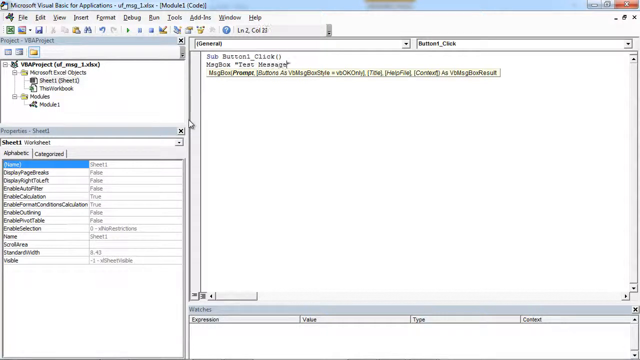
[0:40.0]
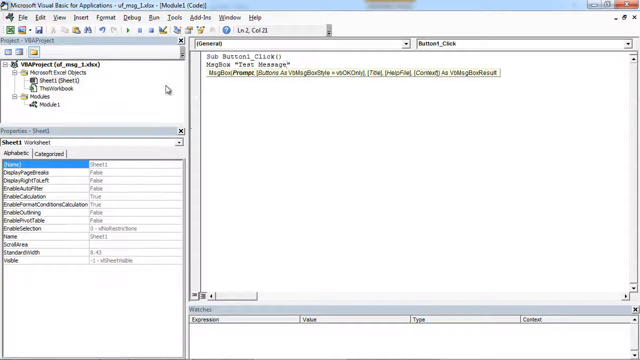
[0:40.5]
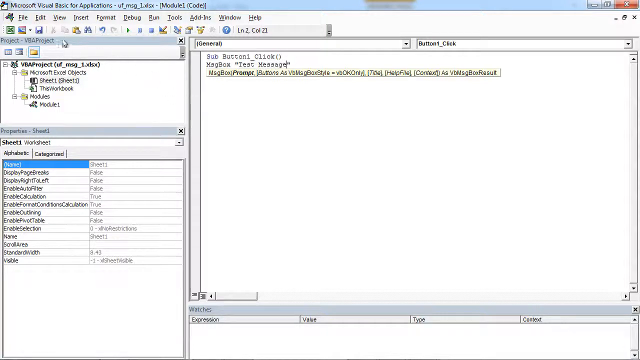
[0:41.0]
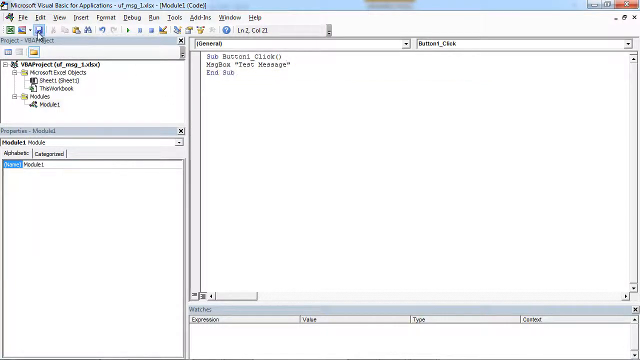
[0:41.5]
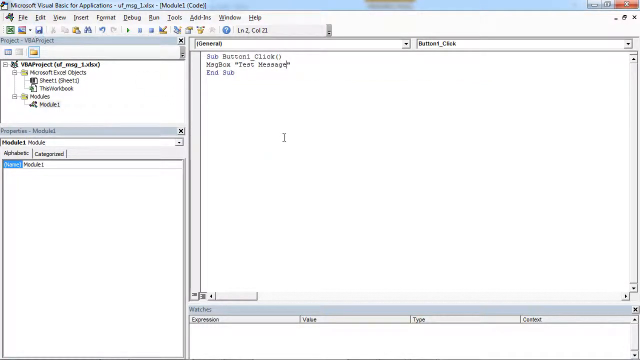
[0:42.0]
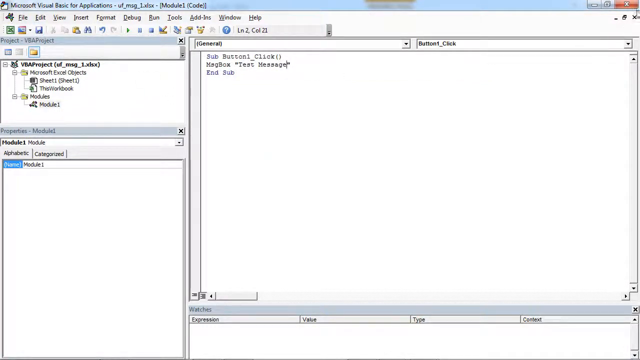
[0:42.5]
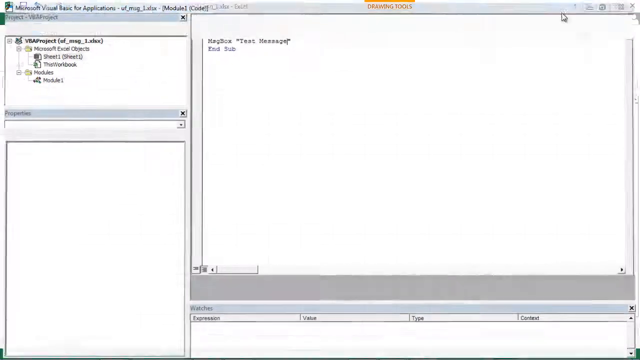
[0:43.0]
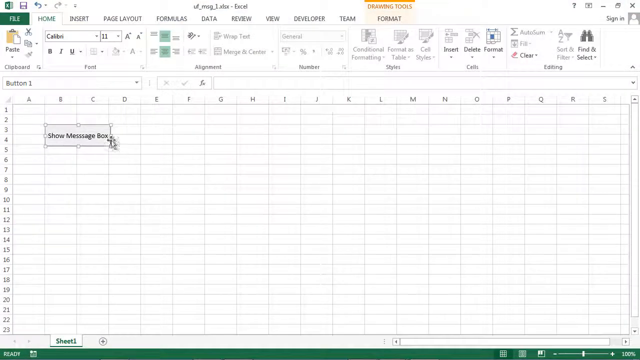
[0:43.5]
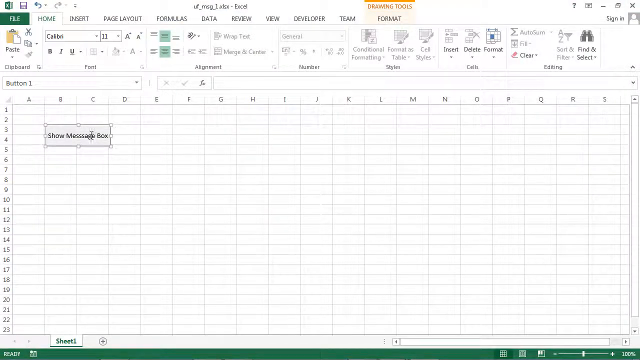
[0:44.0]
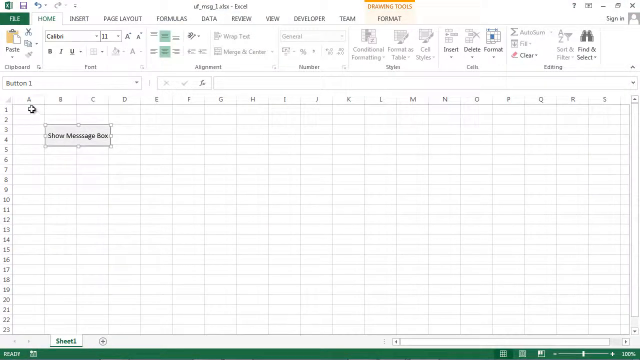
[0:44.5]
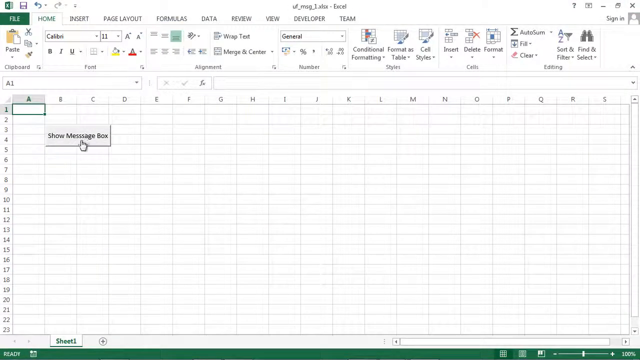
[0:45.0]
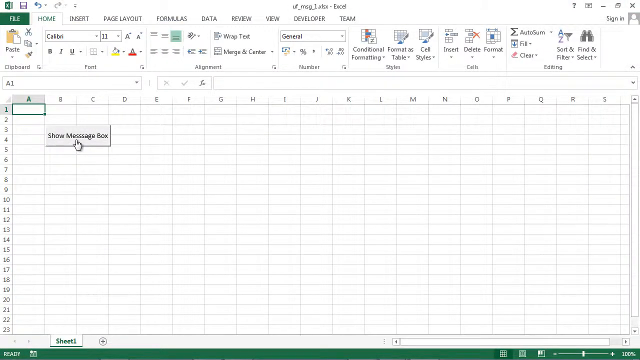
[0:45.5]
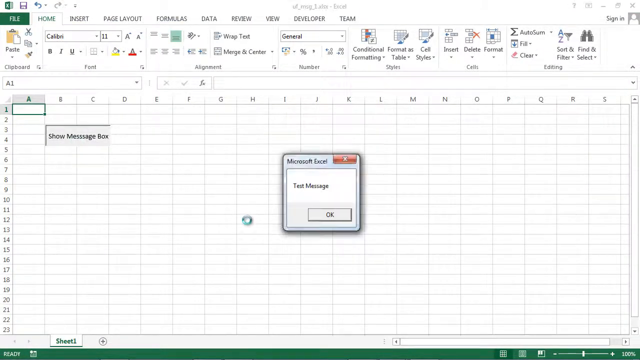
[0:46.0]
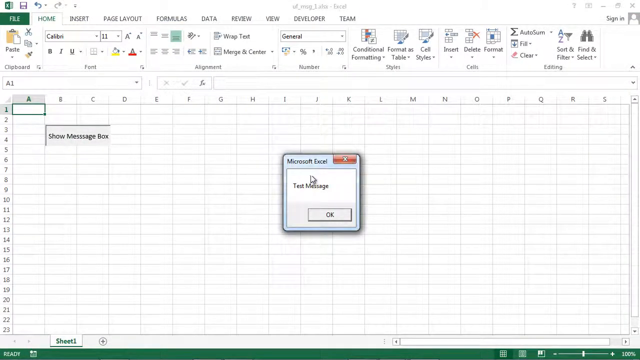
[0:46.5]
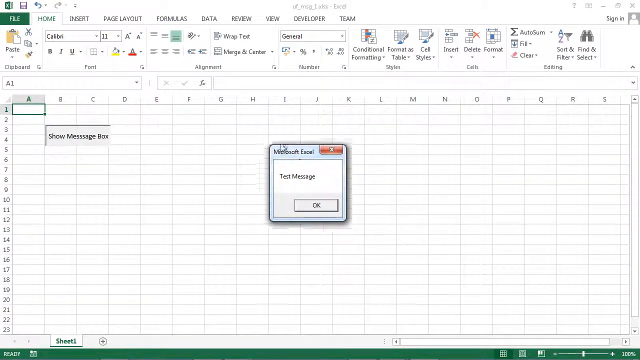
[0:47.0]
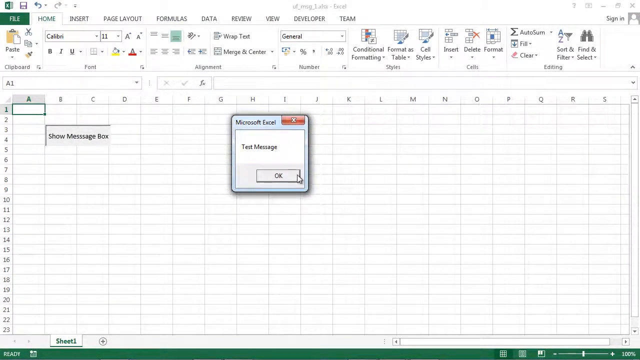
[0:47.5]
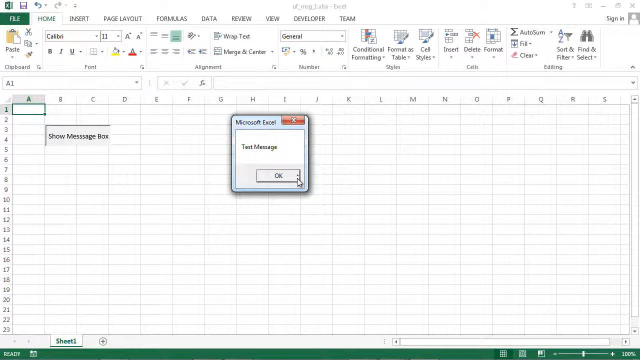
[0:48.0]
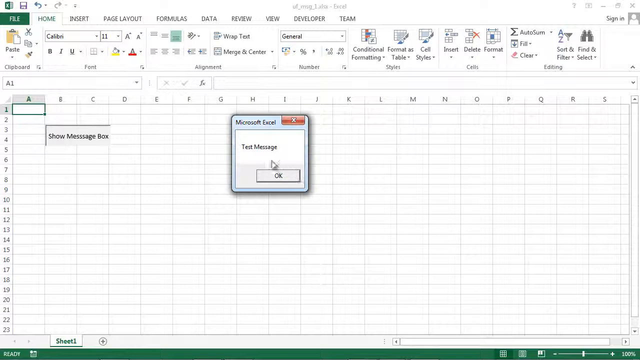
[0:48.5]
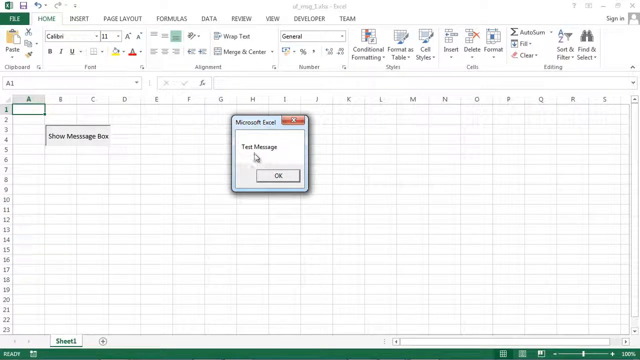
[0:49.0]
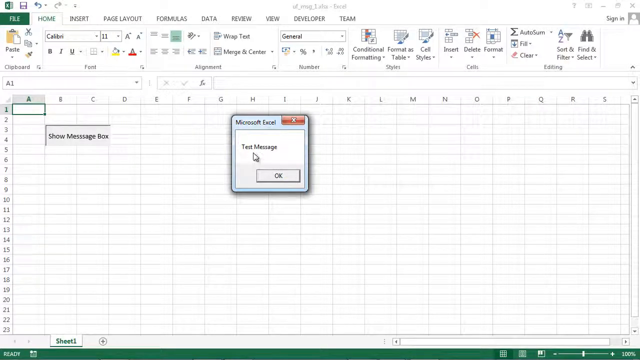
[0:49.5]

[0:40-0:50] Microsoft Excel is displayed, with the File button in green and all the other options, such as Home, Insert, Page Layout, Formulas, Data and Review, in gray. The show message box is pressed, and assign macro takes the page to Microsoft Visual Basic for Applications. There, prompts are typed out, including a text message, and afterwards the screen is closed. Microsoft Excel is then shown again, with prompts and steps much similar to how the video started, and nothing else is done.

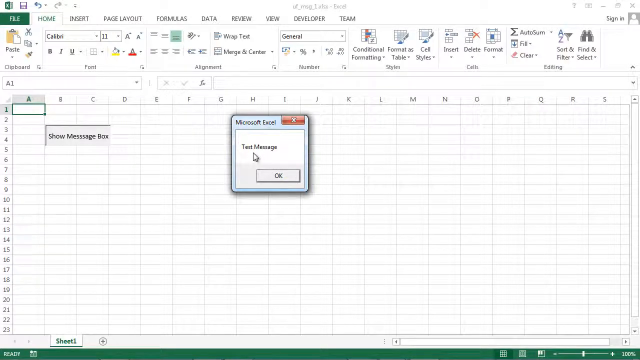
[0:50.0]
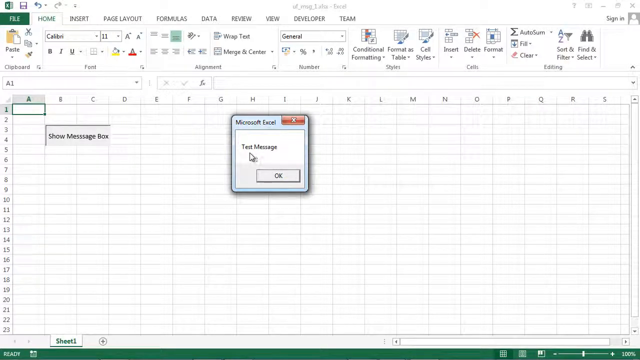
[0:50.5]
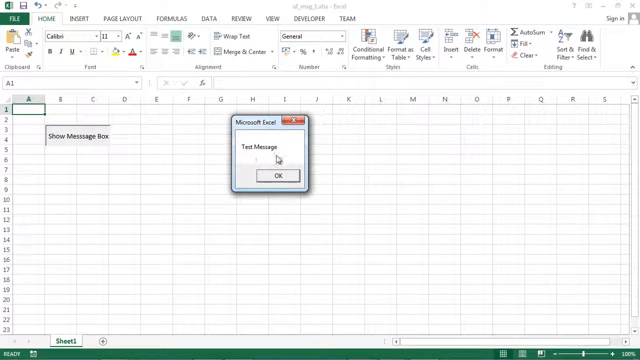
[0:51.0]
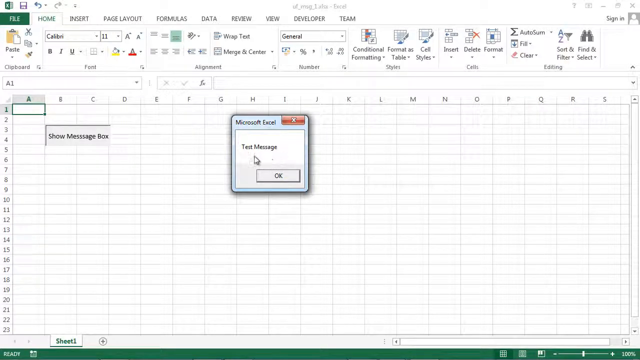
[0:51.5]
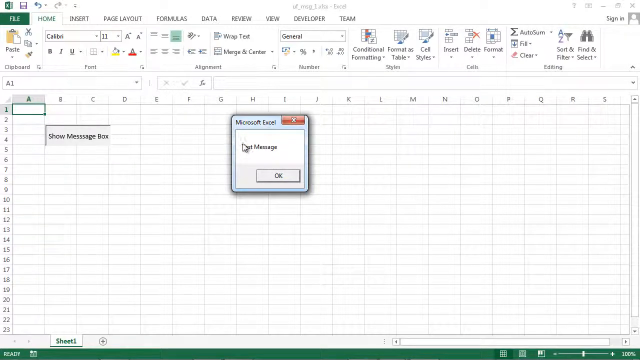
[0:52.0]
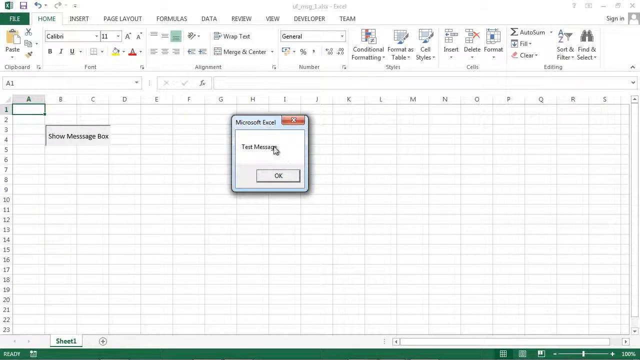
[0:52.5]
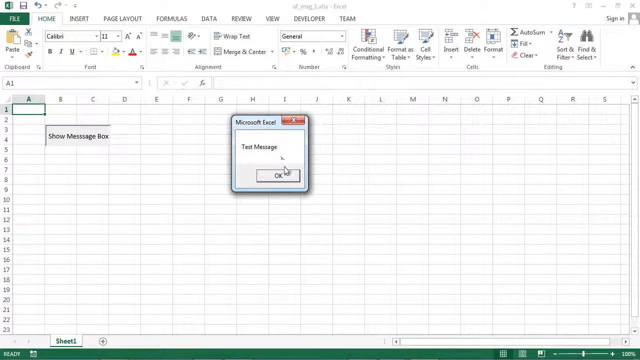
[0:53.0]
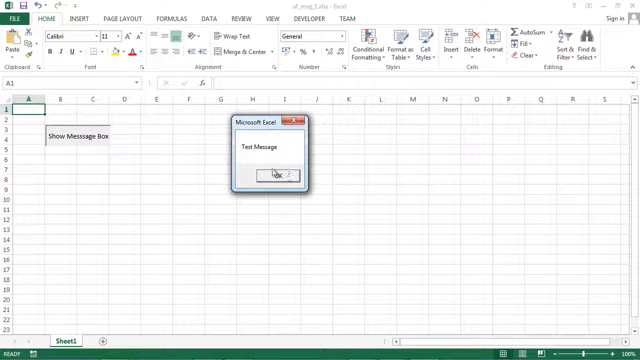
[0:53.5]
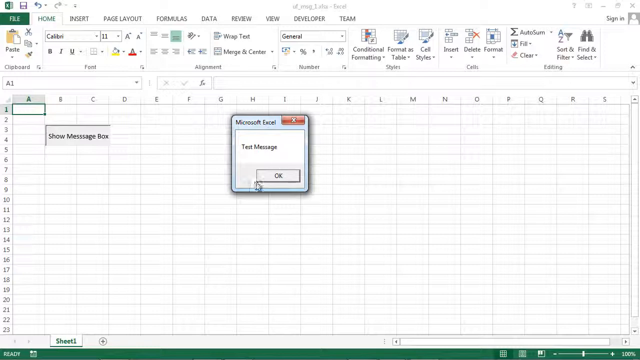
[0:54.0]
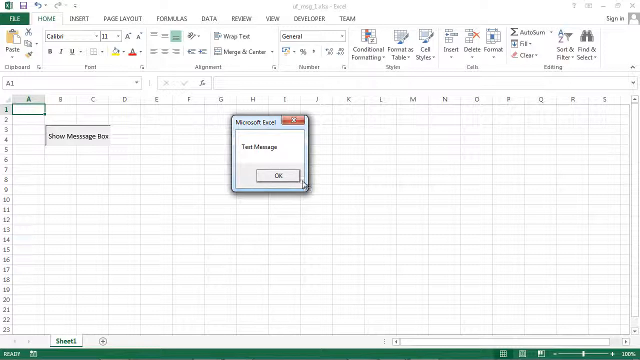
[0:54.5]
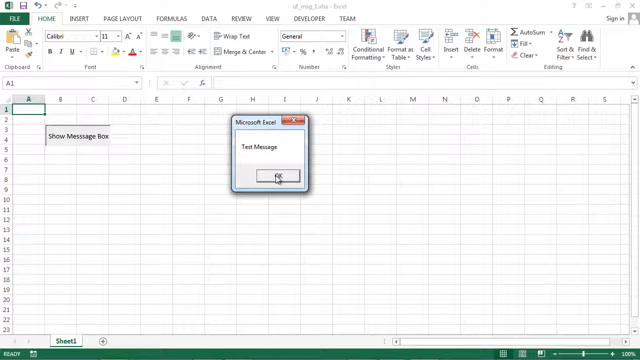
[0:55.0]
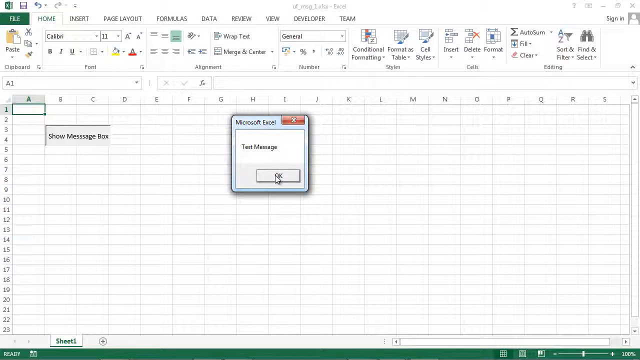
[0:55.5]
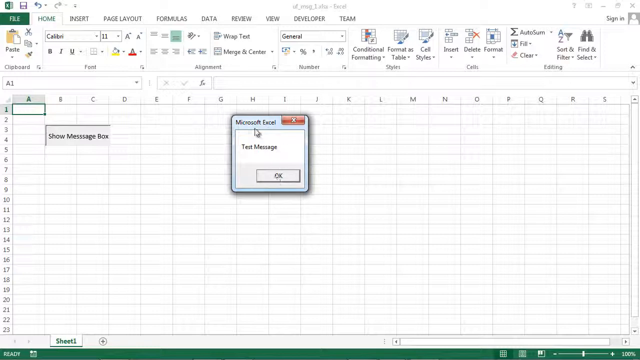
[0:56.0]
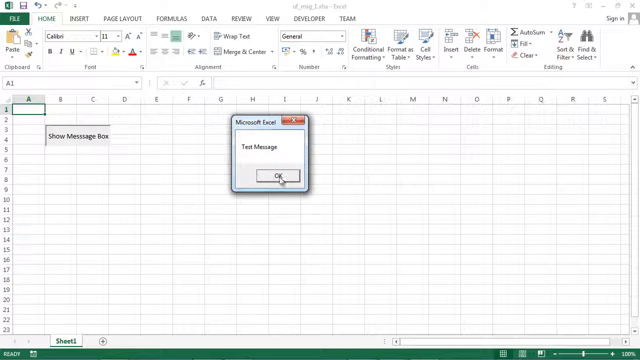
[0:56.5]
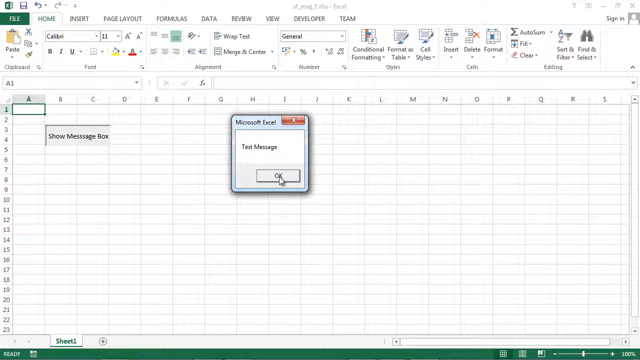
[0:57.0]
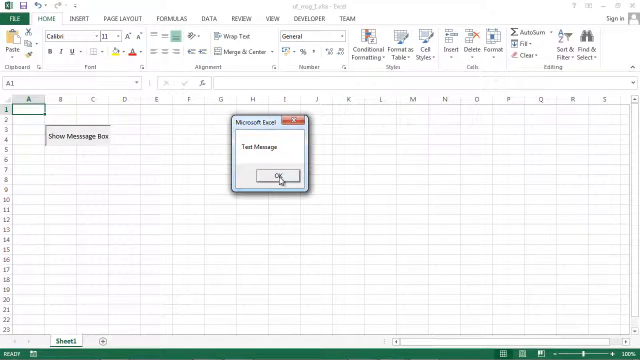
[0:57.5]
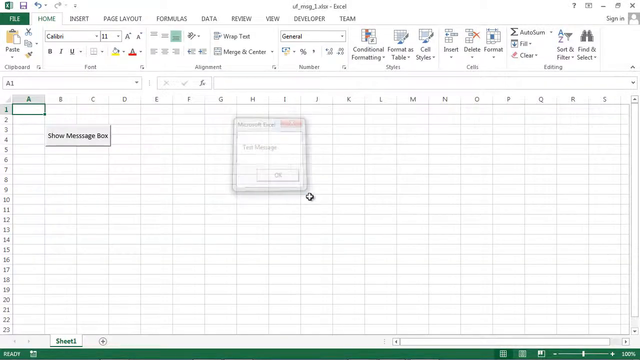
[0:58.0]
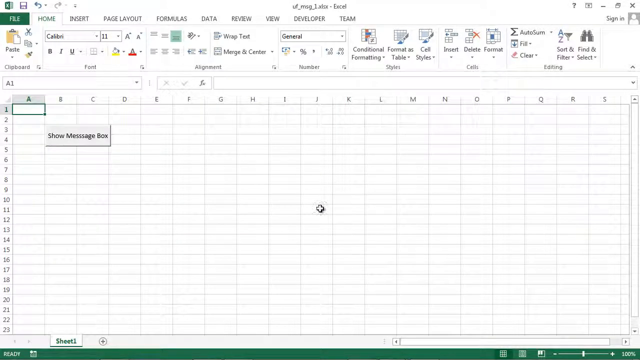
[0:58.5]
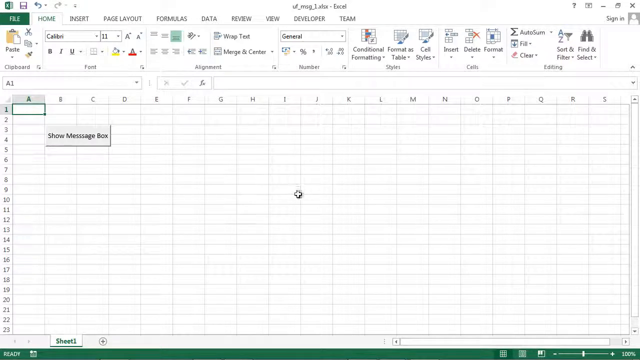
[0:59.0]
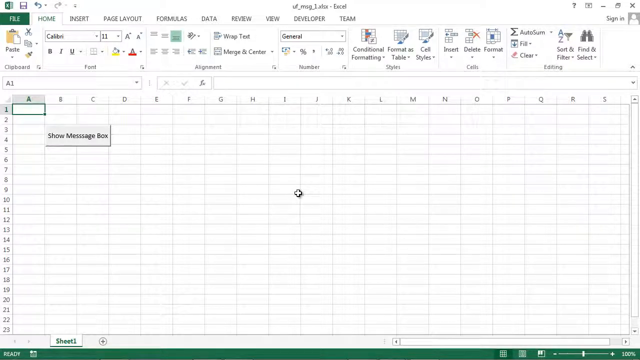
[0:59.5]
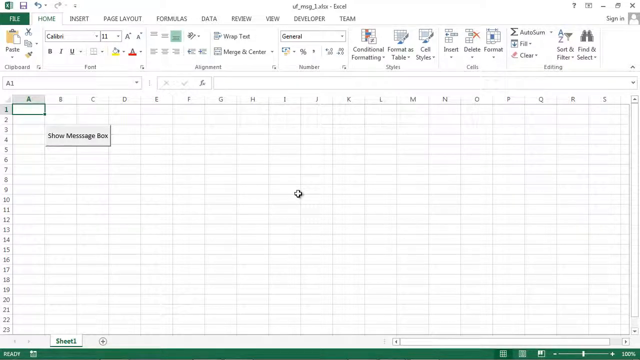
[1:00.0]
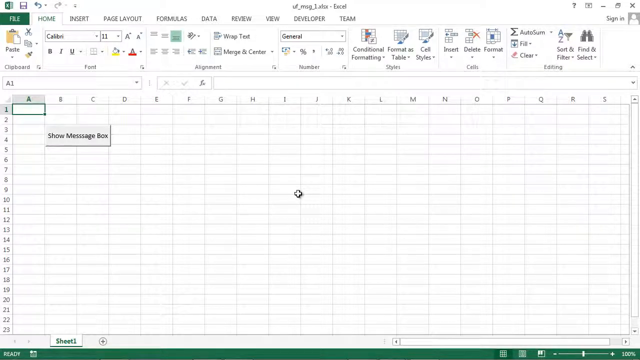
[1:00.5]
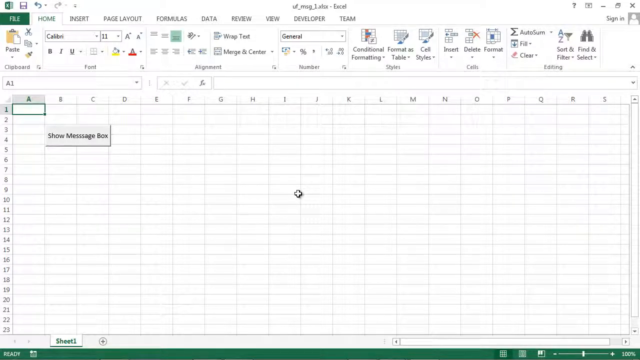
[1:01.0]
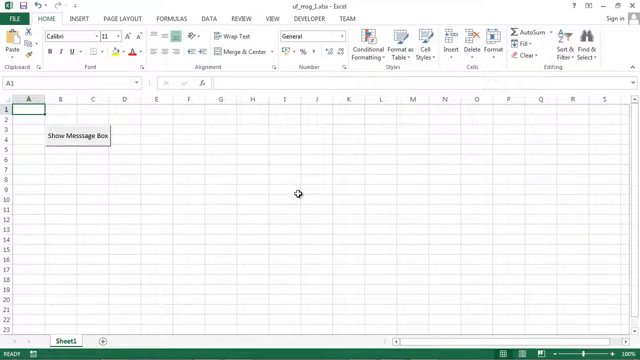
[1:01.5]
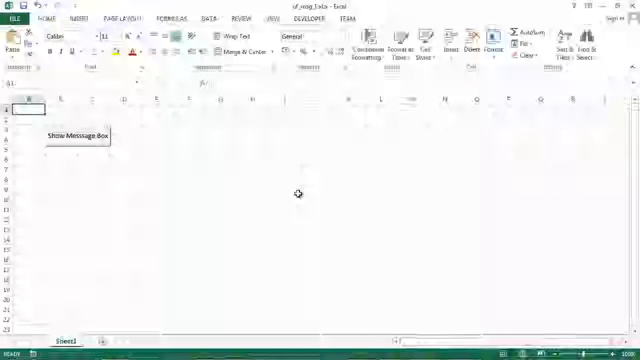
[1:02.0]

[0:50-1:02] Microsoft Excel is displayed, with everything on the tabs still in their original colors. The show message box is still in the middle of the screen, with the sheet box below. It is pressed, and assign macro is ticked again. Microsoft Visual Basic for Applications is then opened, and the matchbox text message is clicked again. Afterwards, the view returns to Microsoft Excel and the text message is clicked. The cursor arrow floats around the screen, then gets centered again and remains there with no motion, clicks or navigation.